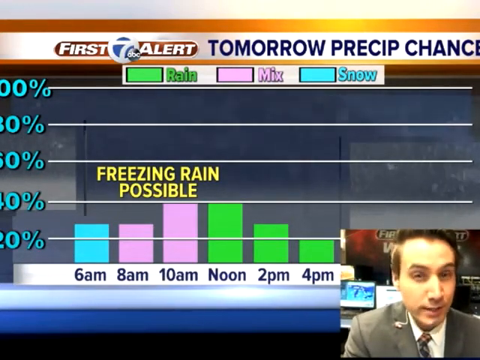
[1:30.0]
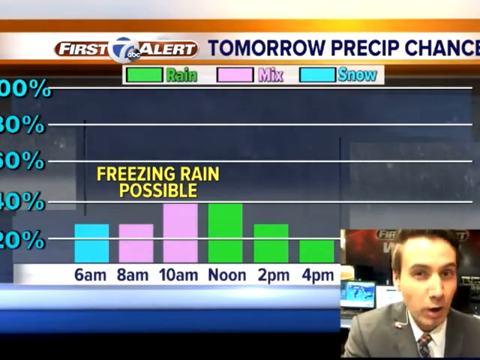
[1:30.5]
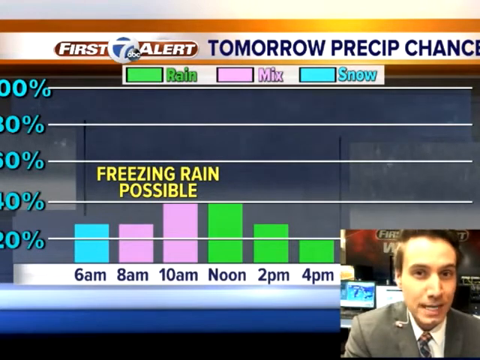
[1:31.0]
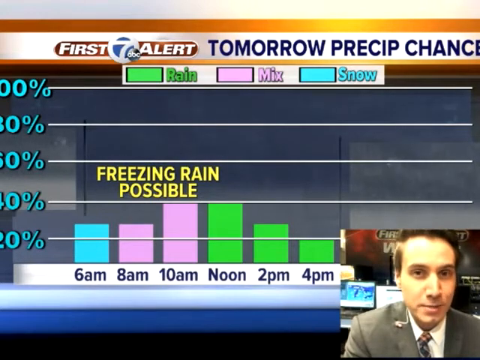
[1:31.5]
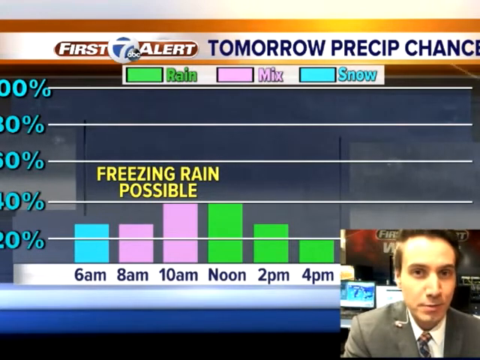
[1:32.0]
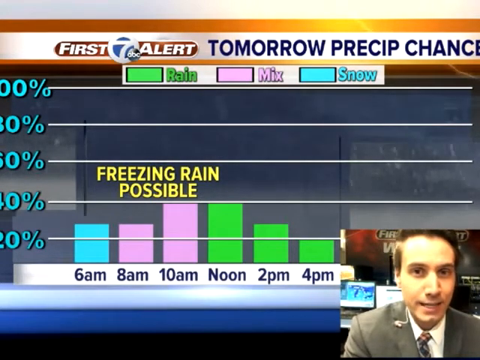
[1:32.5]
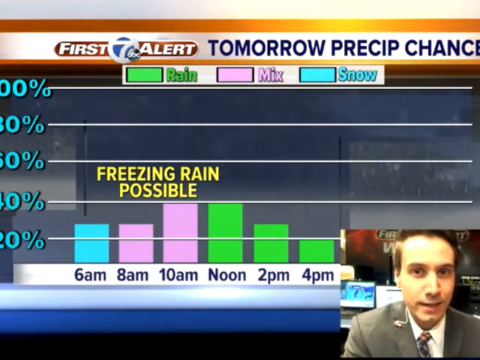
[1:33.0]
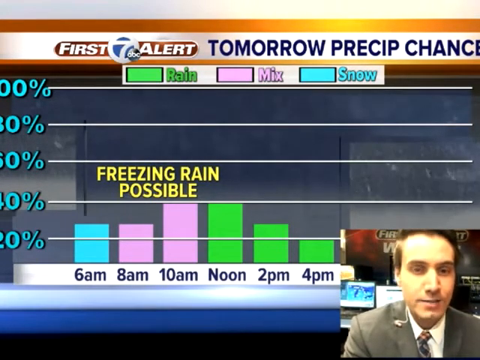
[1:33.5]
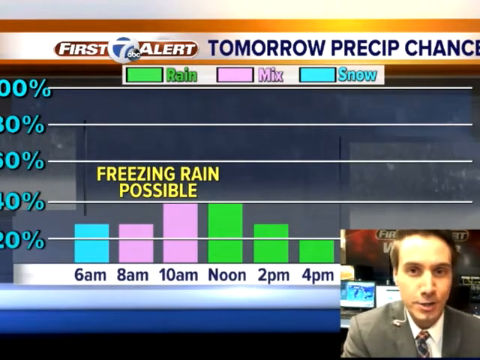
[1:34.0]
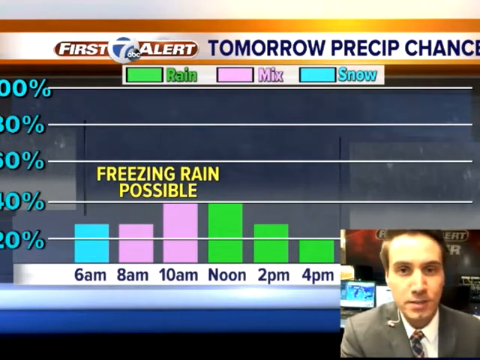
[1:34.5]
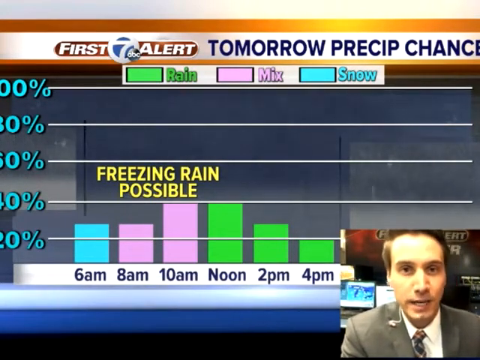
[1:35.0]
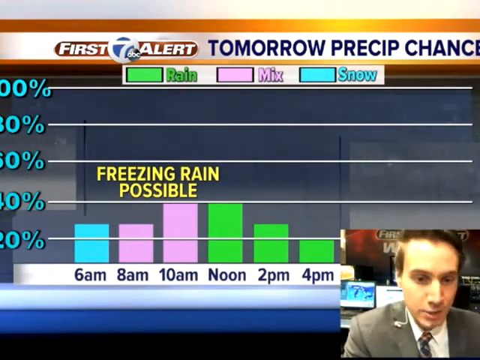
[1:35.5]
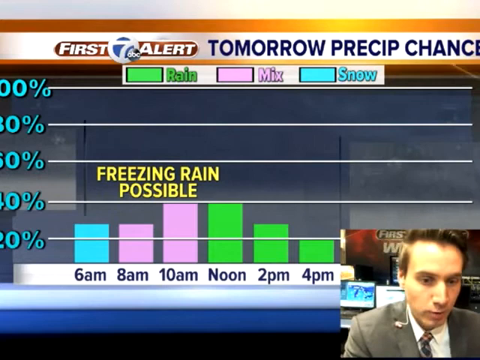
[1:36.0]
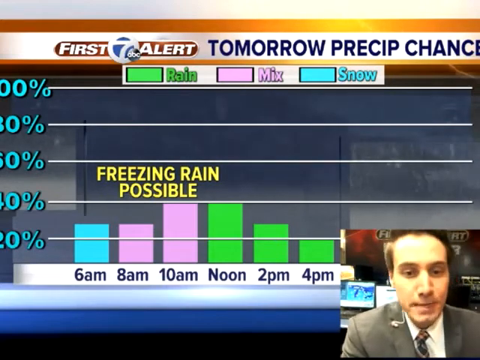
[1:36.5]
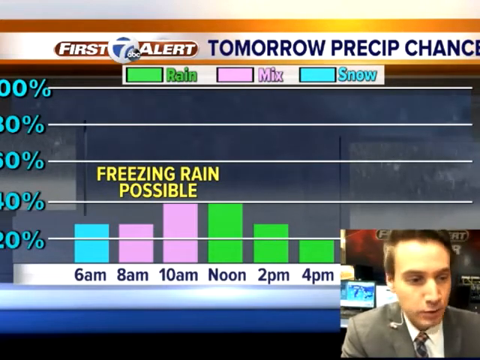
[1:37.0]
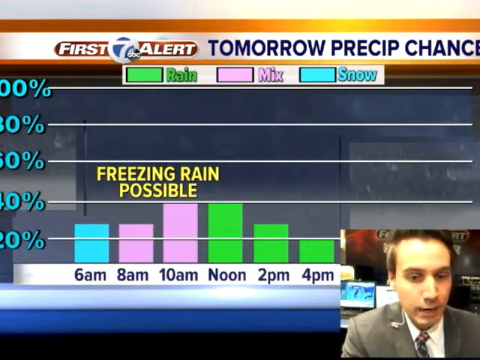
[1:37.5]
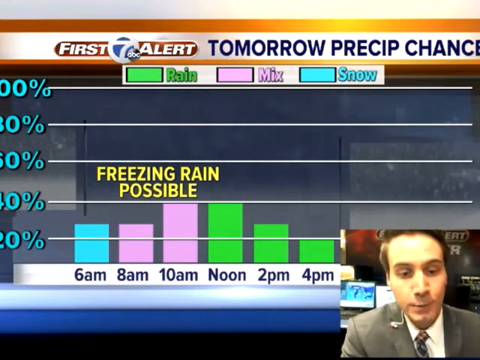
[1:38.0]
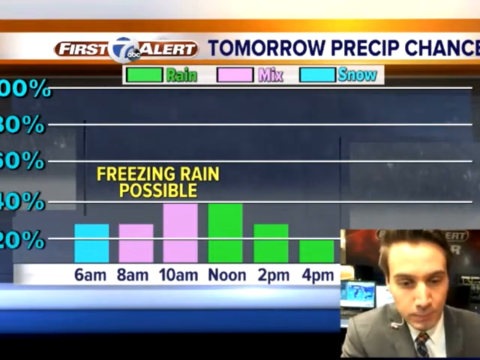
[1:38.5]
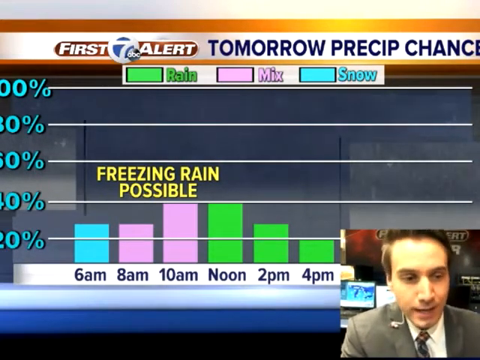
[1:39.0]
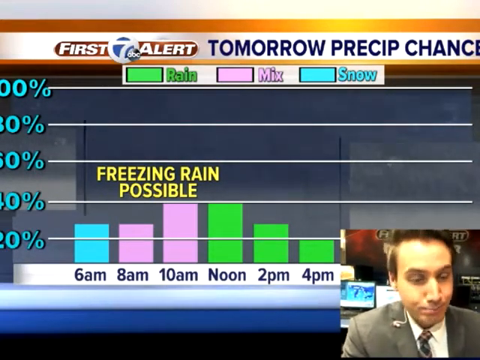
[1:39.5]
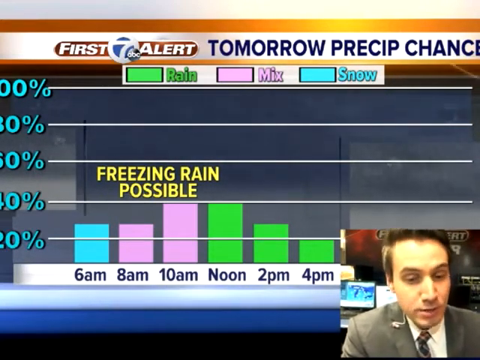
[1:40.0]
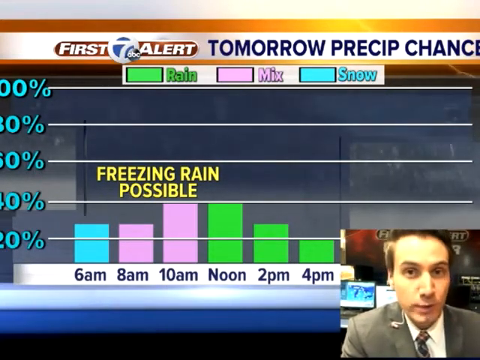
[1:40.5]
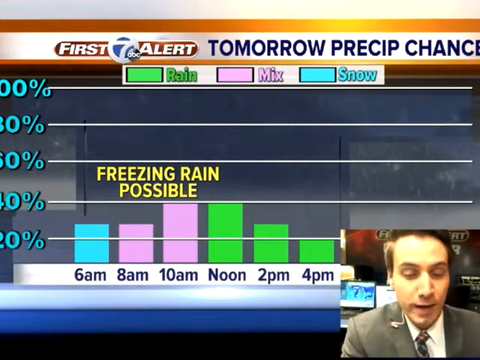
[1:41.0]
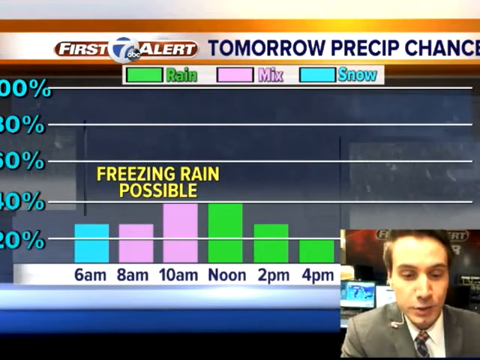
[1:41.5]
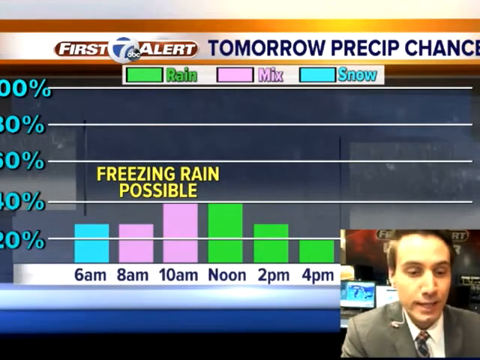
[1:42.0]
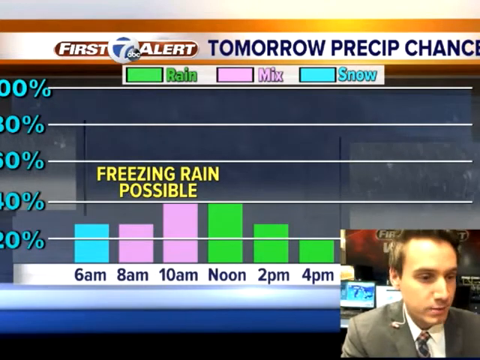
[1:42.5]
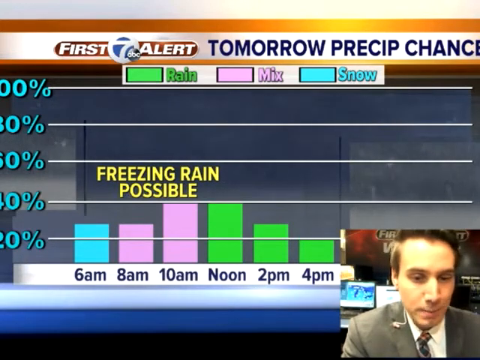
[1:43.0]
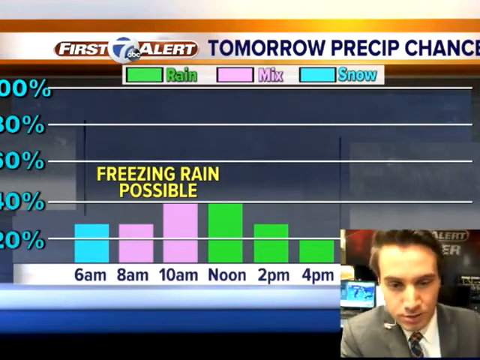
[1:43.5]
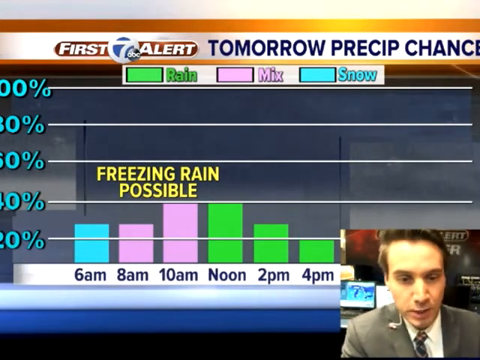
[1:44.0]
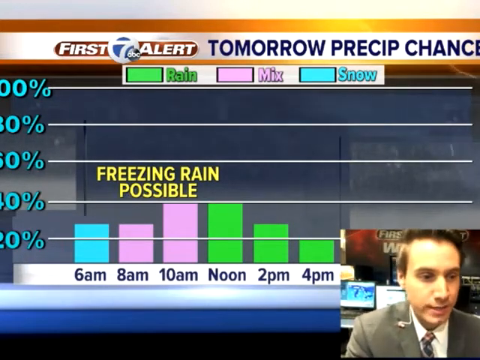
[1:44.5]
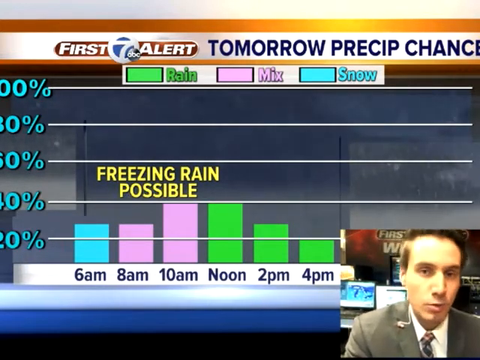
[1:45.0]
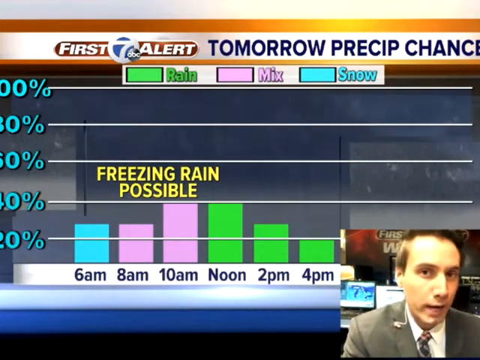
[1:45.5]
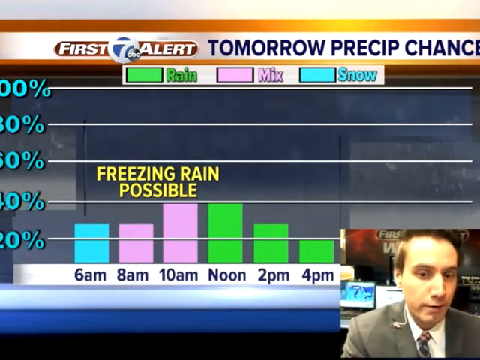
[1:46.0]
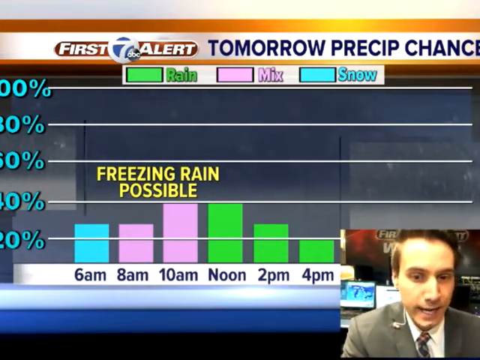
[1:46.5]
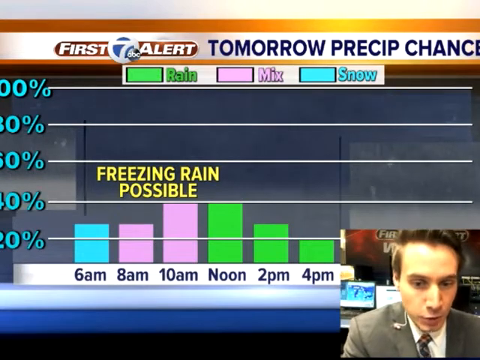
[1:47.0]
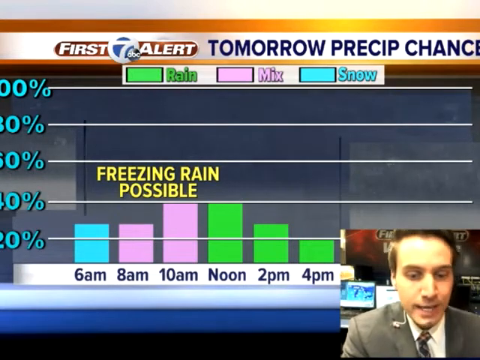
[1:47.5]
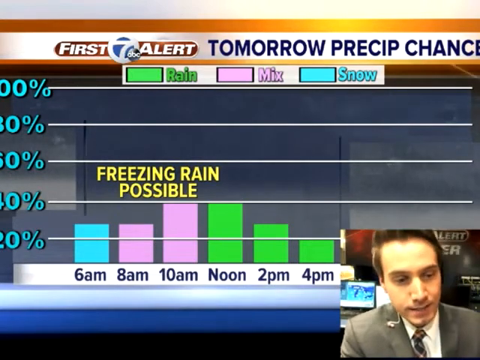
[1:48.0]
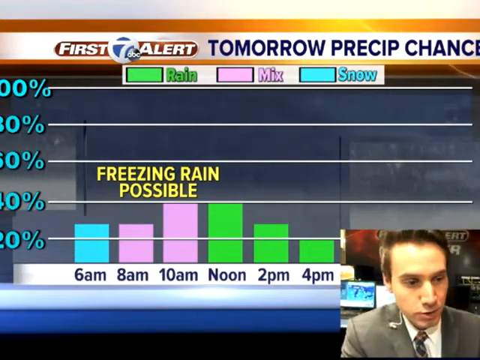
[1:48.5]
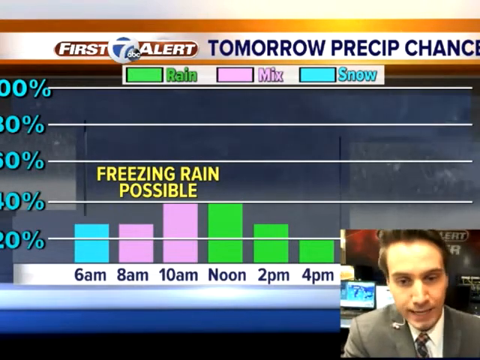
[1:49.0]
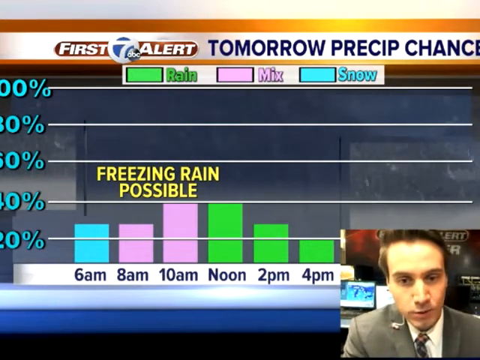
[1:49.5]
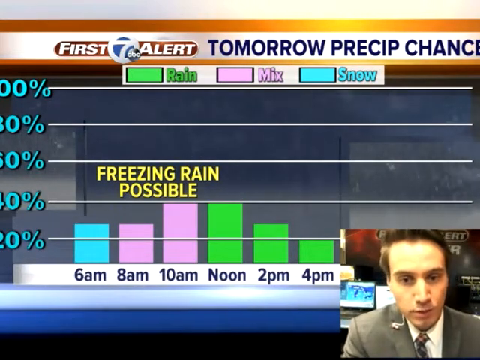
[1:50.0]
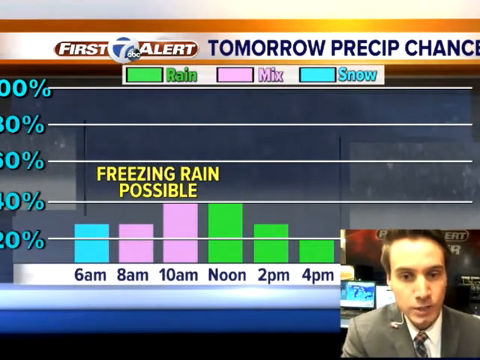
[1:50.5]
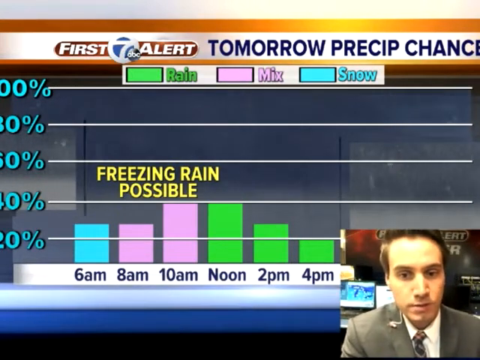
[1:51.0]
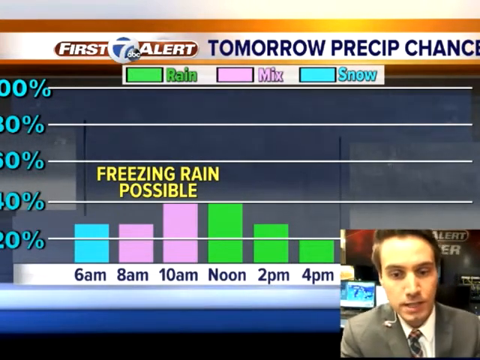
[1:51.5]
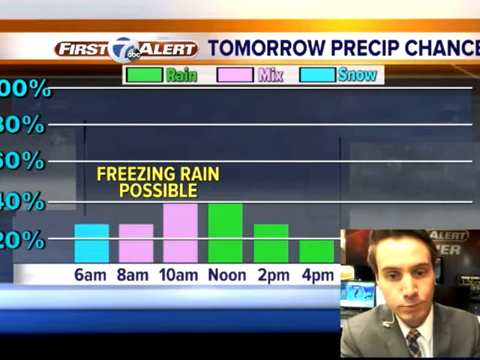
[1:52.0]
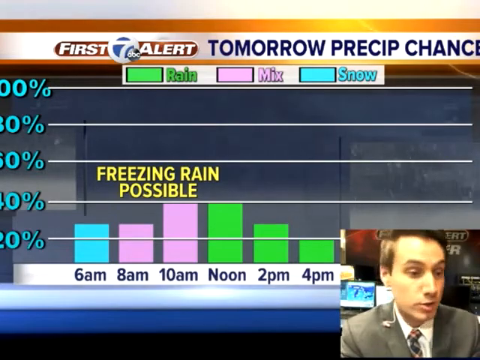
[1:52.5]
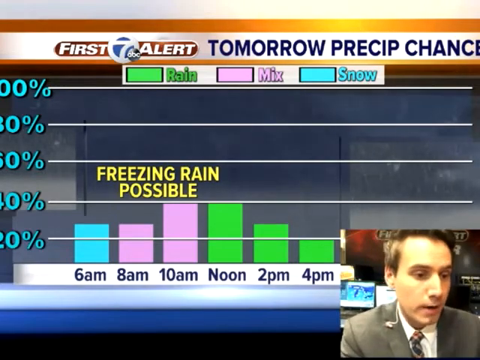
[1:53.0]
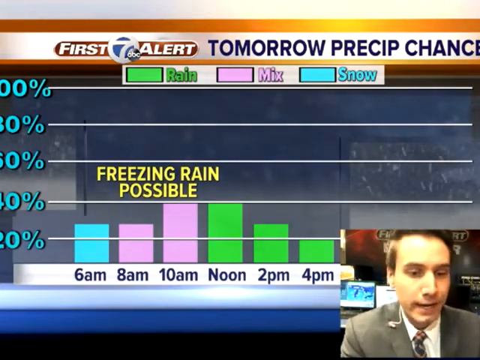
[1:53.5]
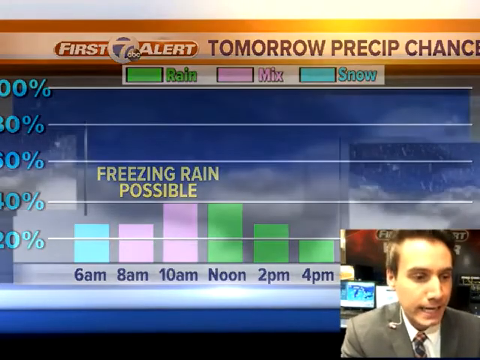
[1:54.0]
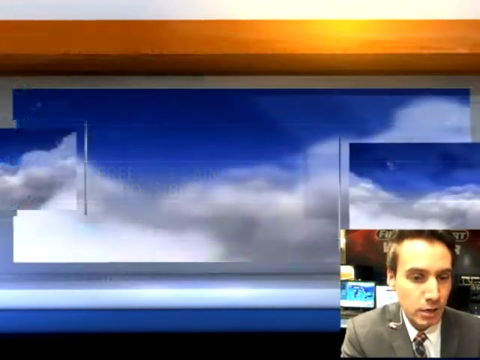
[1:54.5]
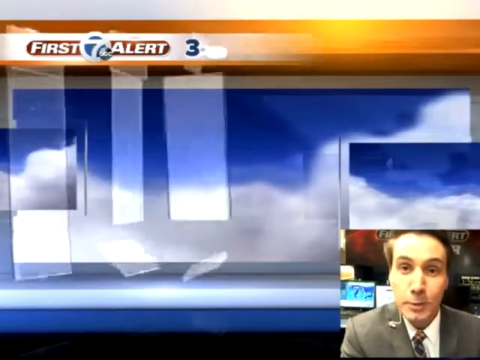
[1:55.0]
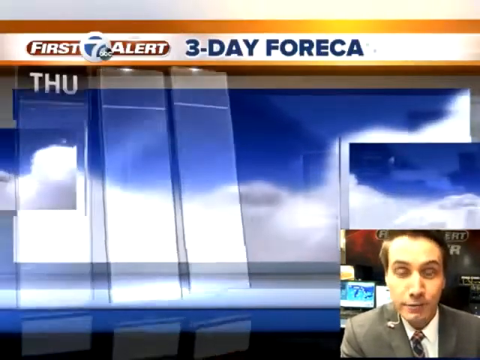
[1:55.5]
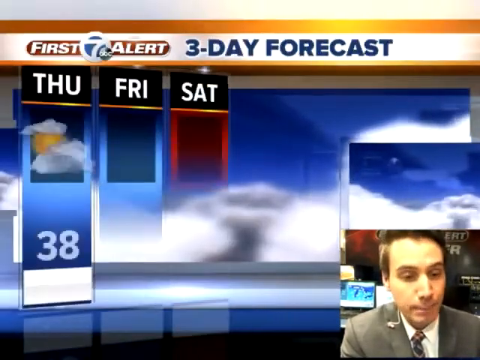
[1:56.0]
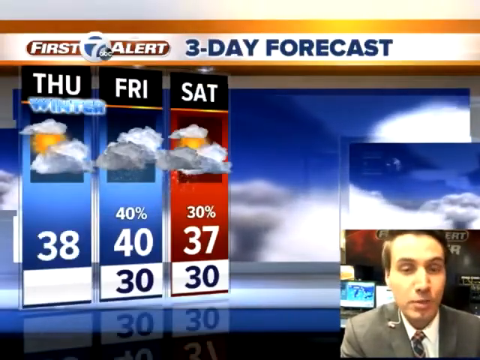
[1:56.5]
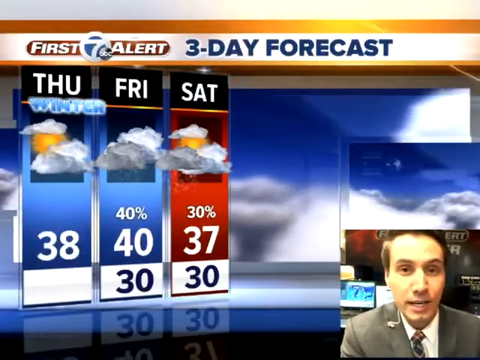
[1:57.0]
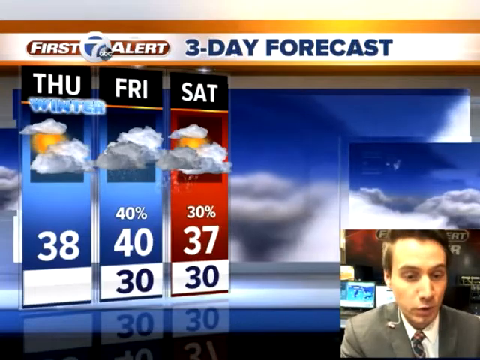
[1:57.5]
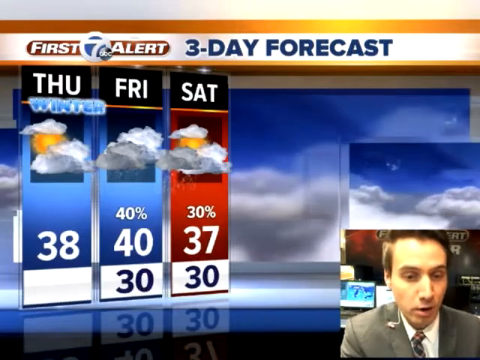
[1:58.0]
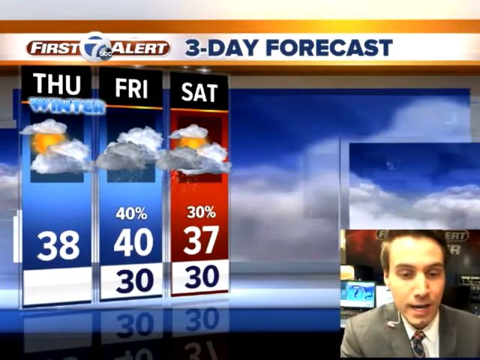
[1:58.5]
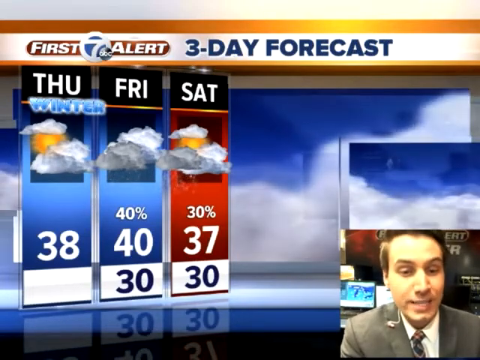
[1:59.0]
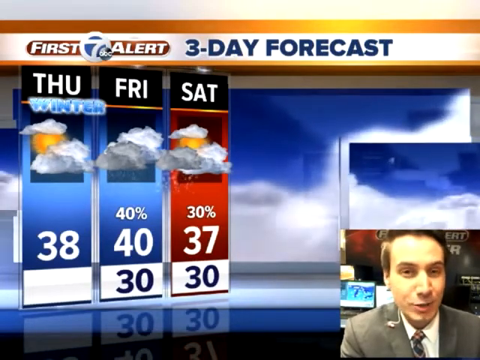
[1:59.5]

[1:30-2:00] A bar graph of the mix of rain and snow is still shown, along with the percentage chance of rain. Then the forecast appears: Thursday at 38-39 degrees with a cloudy sky, Friday at 40-39 degrees with a 30-40% chance of rain, Saturday with a 37% chance of rain, and Sunday with a 30% chance of rain. There is a potential for snow.